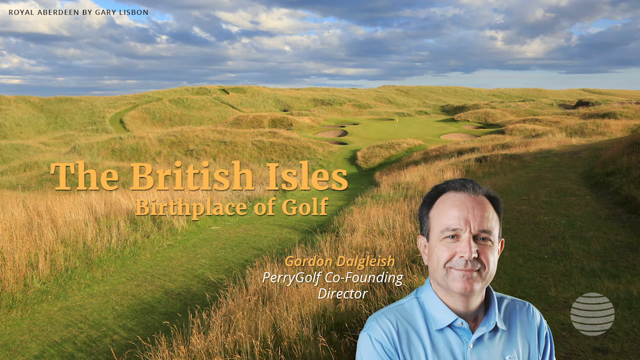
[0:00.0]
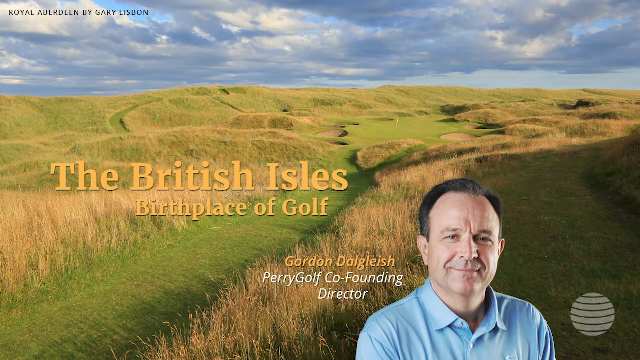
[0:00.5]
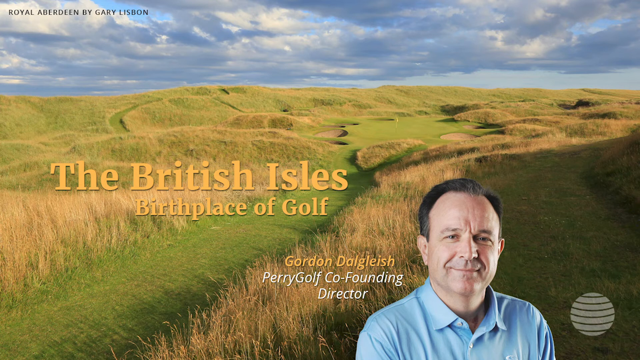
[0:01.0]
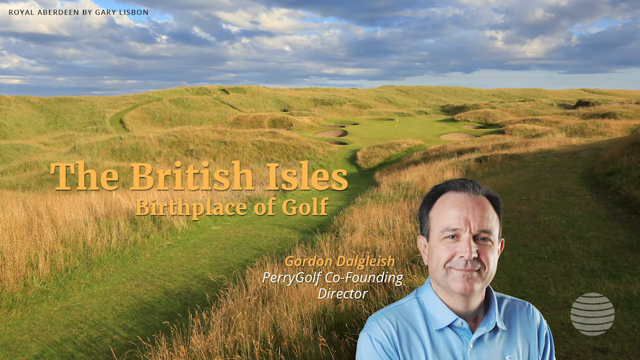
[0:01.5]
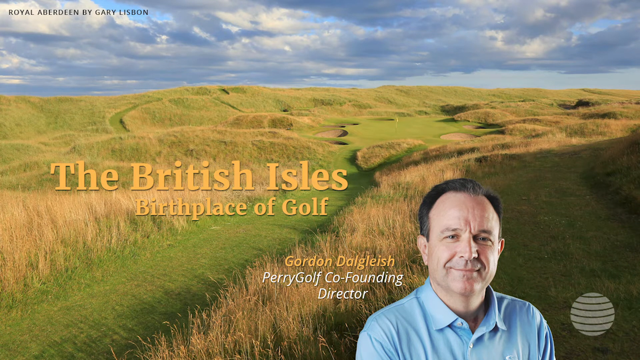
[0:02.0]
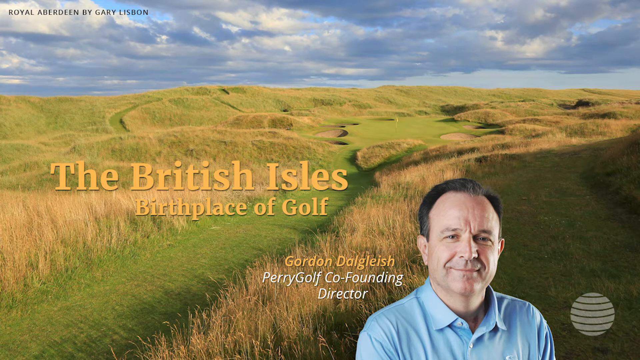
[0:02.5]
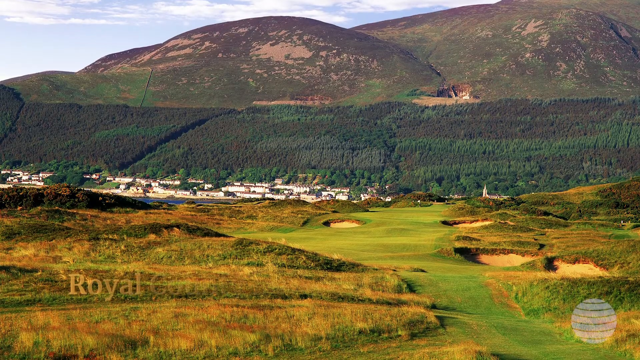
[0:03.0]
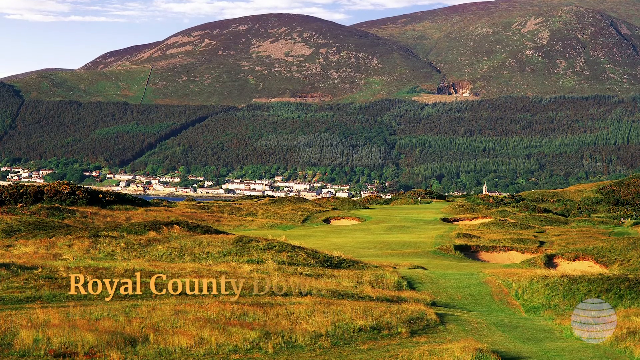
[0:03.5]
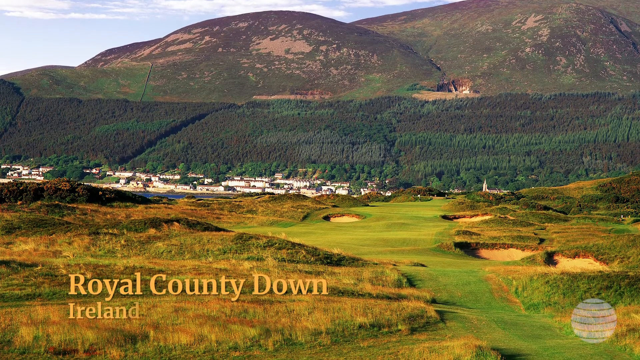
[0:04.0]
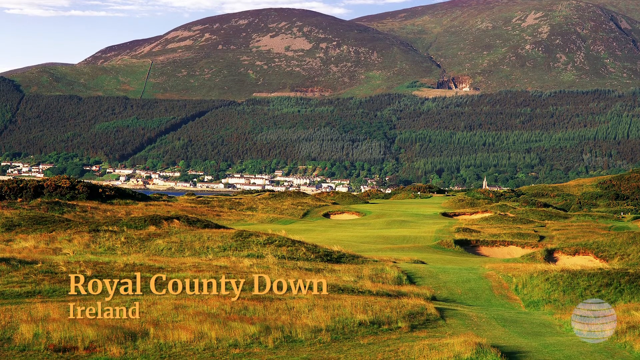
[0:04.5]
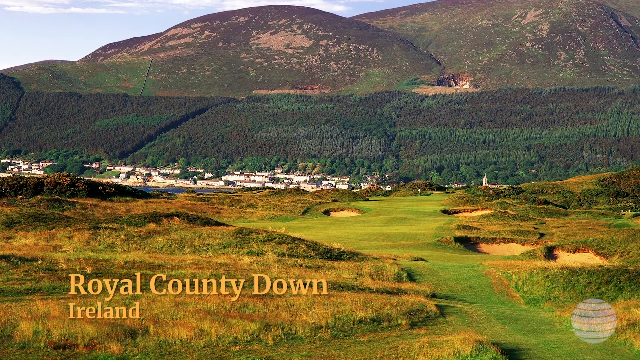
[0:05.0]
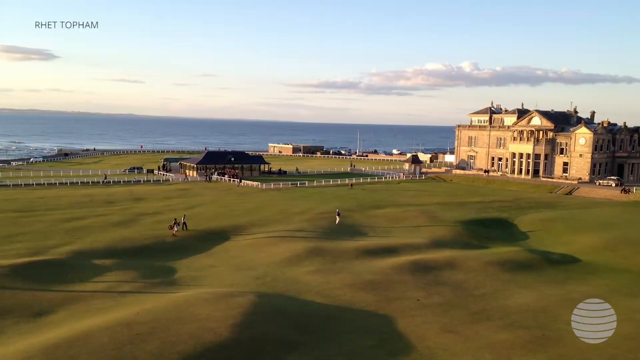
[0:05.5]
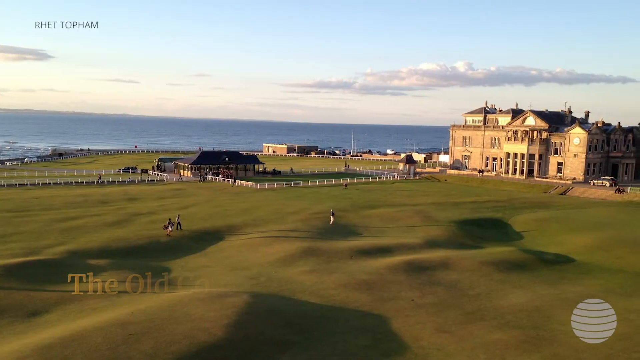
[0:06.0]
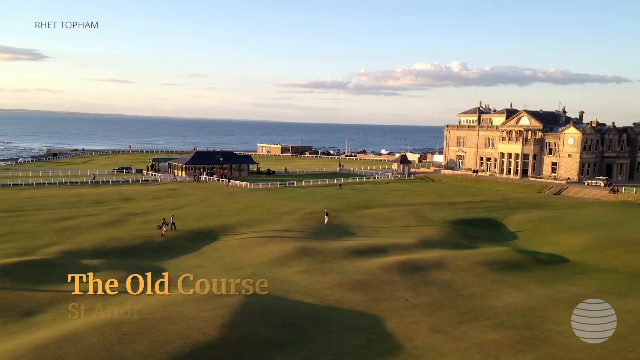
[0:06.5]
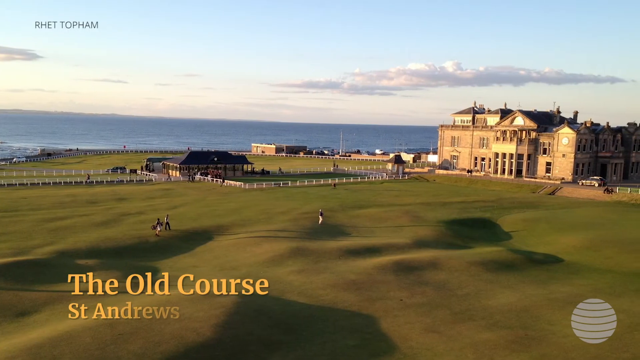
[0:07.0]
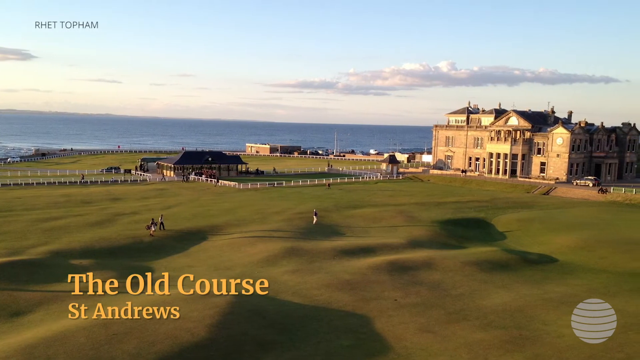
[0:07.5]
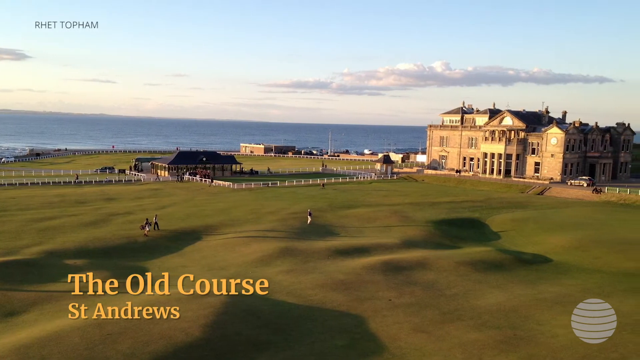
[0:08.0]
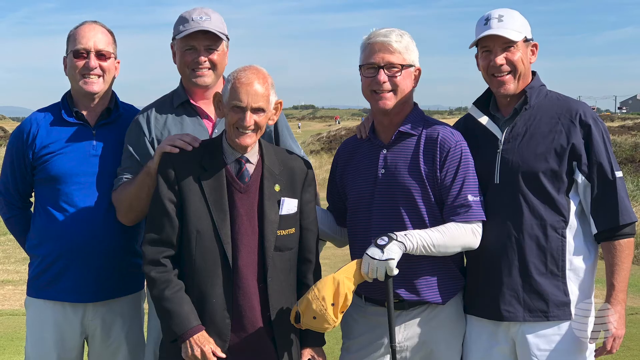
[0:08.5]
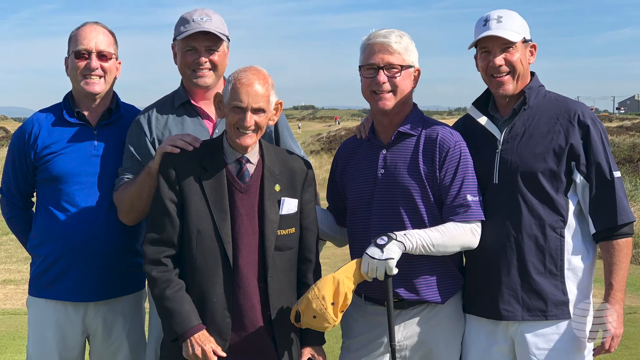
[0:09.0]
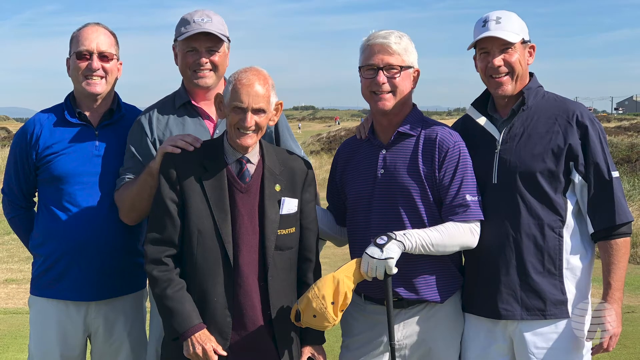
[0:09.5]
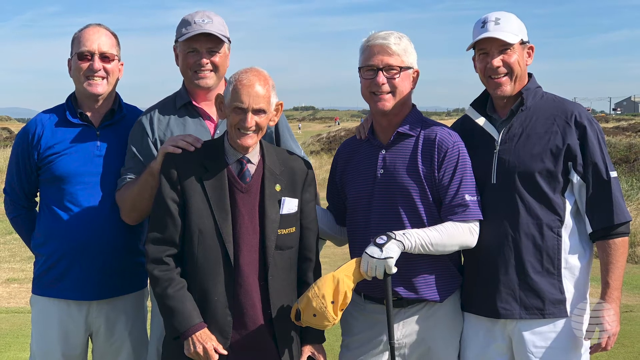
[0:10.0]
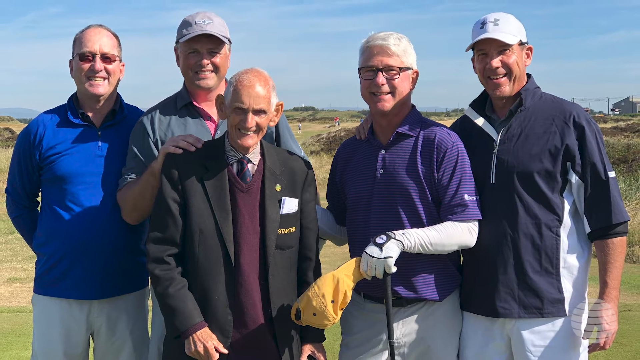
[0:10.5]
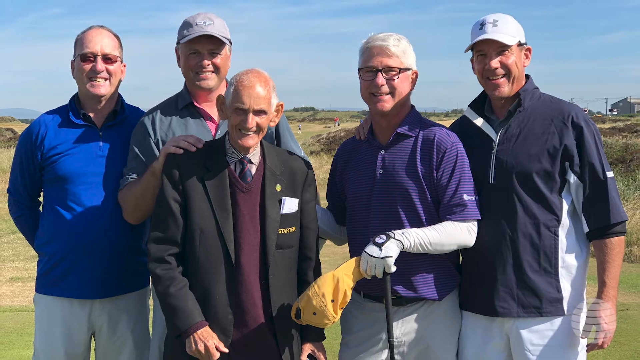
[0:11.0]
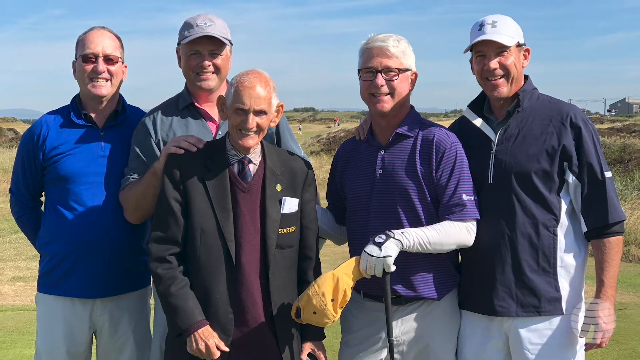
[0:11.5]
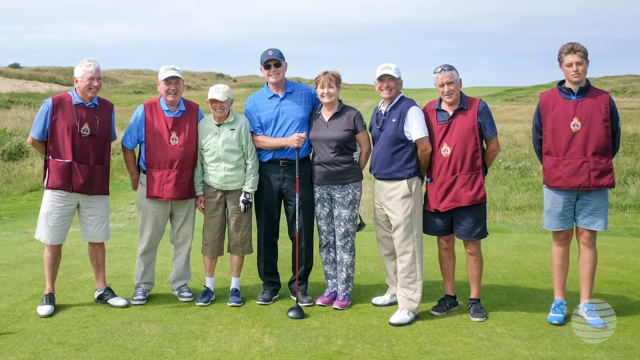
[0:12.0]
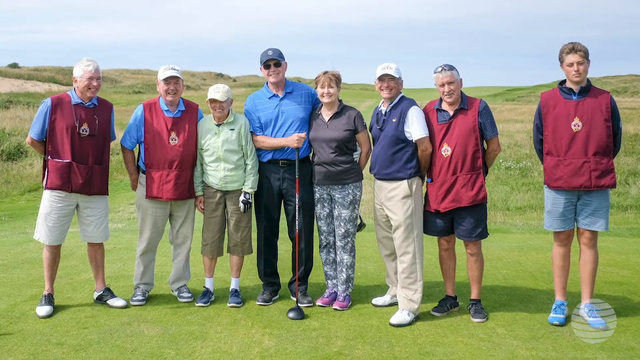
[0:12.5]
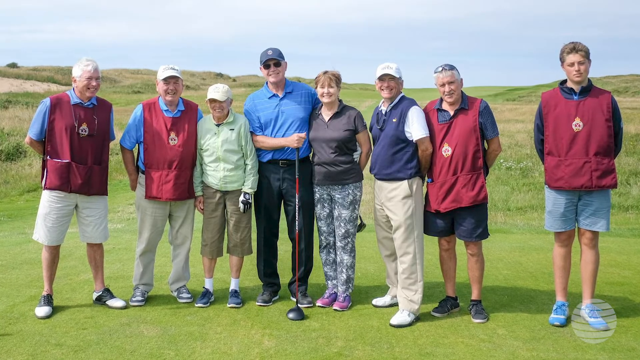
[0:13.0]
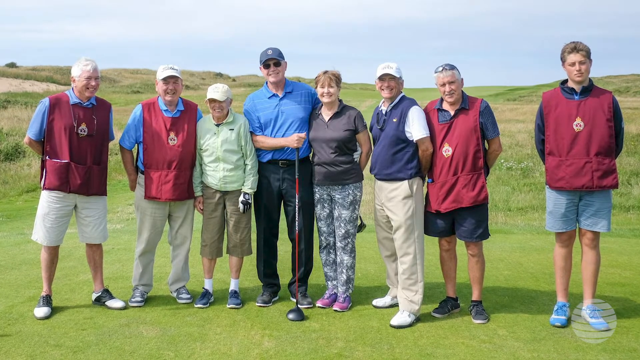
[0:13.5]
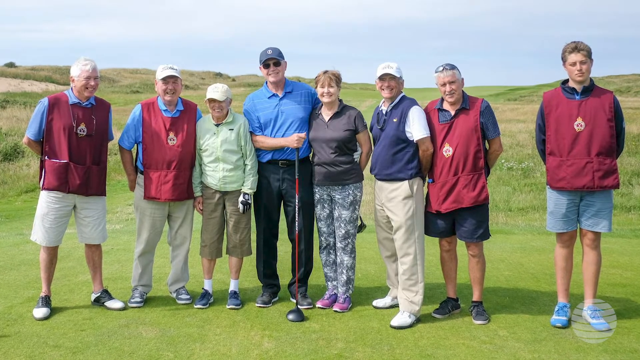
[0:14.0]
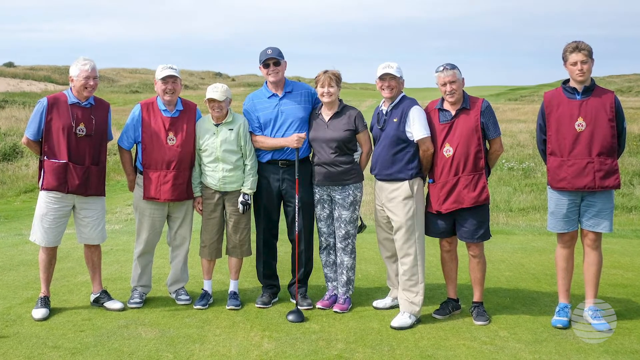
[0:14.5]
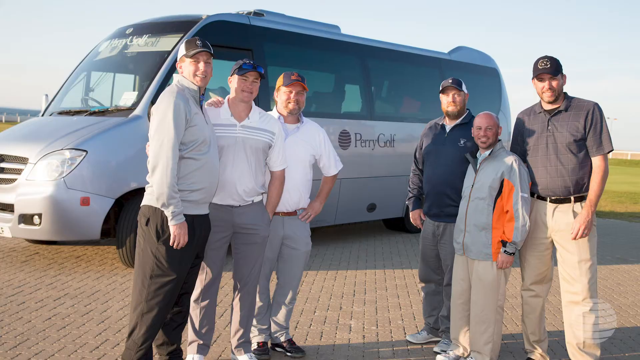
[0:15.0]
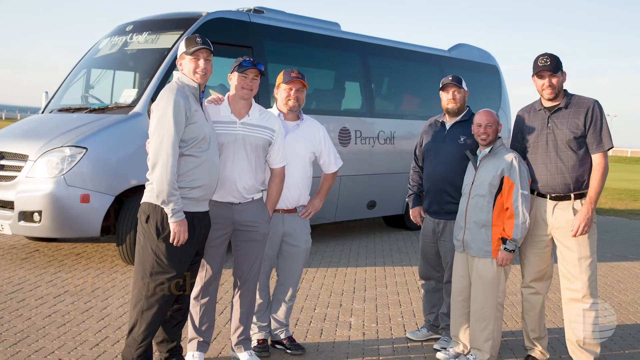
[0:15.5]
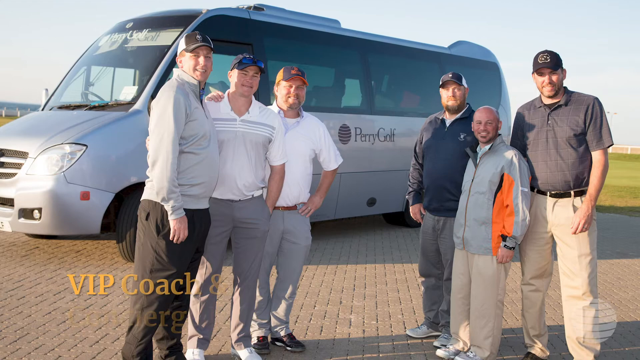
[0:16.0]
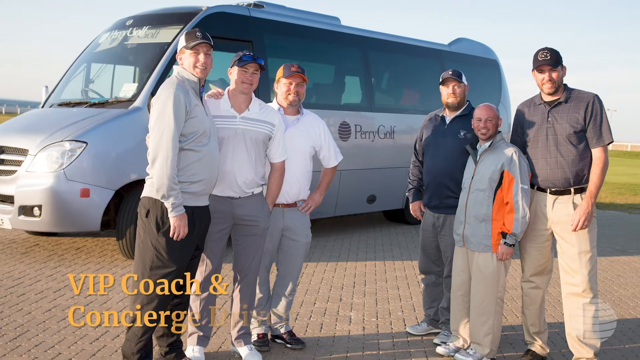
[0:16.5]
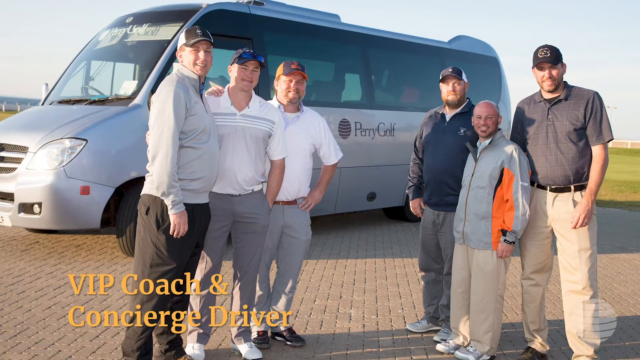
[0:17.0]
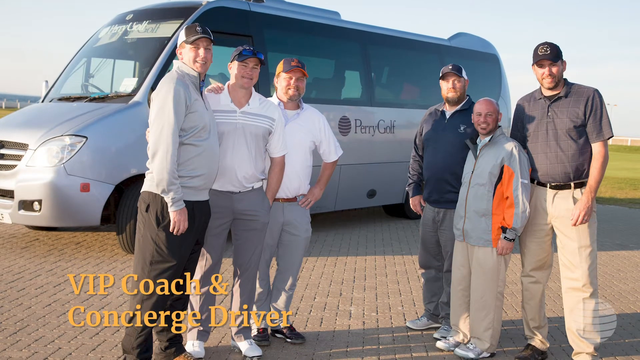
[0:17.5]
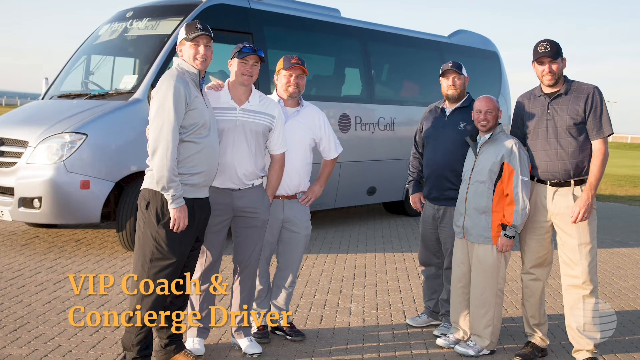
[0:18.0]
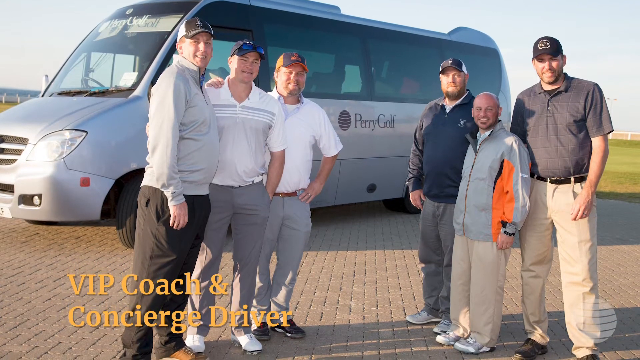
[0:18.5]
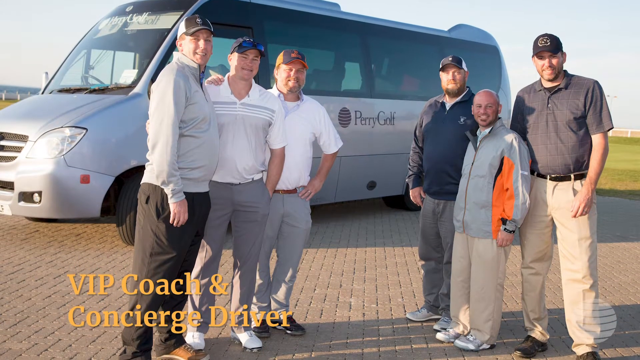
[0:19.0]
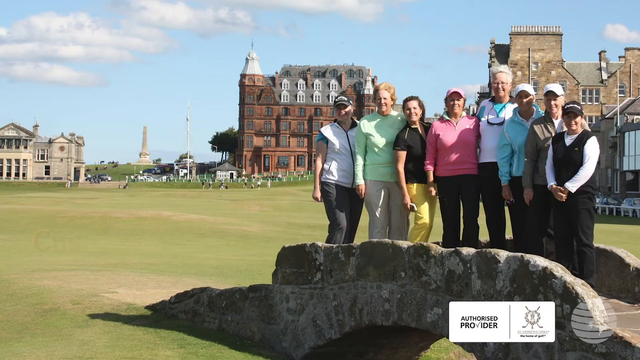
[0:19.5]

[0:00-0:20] What looks like some sort of documentary opens on a British meadow, apparently a golf course, very natural compared to courses in the United States. There is a big mown section with what may be a few sand traps and a path between the golf holes. It is a sunny day but looks to be late evening, with a somewhat overcast sky and a little blue peeking through. In front, on the far right, is a photo of a slightly balding man with black hair, maybe 60, in a light blue polo shirt. To the left, text reads "Gordon Dagleish PerryGolf Co-Founding Director", and yellow text above that and to the left reads "The British Isles birthplace of golf", so it appears to be a documentary about the birthplace of golf and how golf originated. In the lower right-hand corner is a logo, probably for a TV station or network: a transparent white circle with a bunch of horizontal lines across it on a slightly curved angle. In the upper left-hand corner, black text reads "Royal Aberdeen by Gary Lisbon". Next comes a photo of the golf course at Royal County Down in Ireland, which looks very old money and fancy, with a mountain, a forest beyond it and a small town. Then a shot shows a big manor house with some paddocks in white fencing by the seaside, with text reading "the old course St. Andrews". A photo follows of five older men golfing: a man on the left in a long-sleeved blue shirt, a stonewashed blue polo shirt, a younger man in a gray baseball cap, an elderly man in a black suit with a maroon sweater vest, a man to his right in a purple polo shirt with white hair and glasses, and a man on the far right in a navy blue and white sports jacket, white pants and a white Under Armour cap. They are standing in a pose with the golf club. Another group photo shows some men wearing maroon vests over their polo shirts and four golfers in the center, three men and one woman; the man just left of center is holding a big driver. Then a photo shows a group of men in various golf gear standing in front of the PerryGolf van, with text reading "VIP coach and concierge driver".